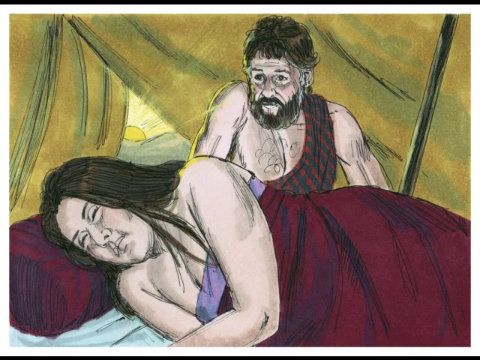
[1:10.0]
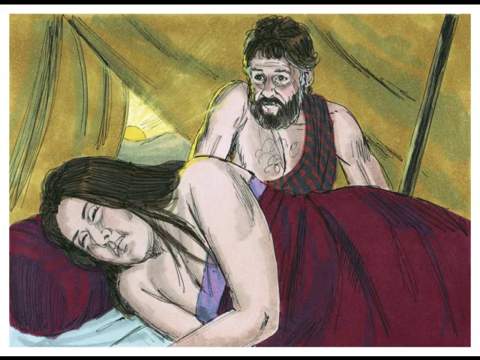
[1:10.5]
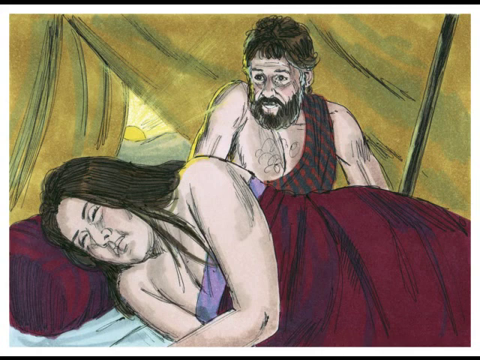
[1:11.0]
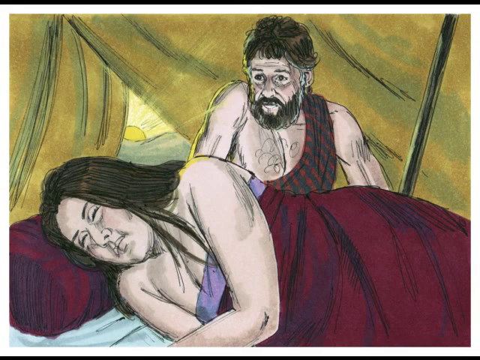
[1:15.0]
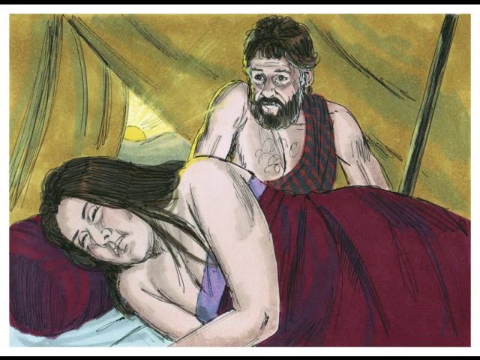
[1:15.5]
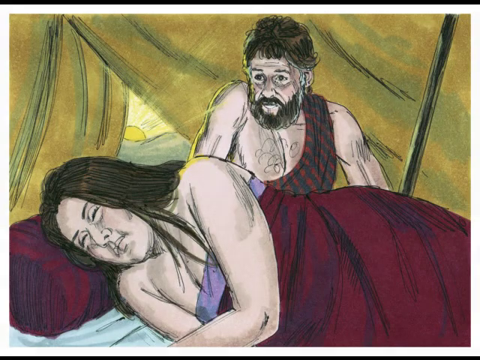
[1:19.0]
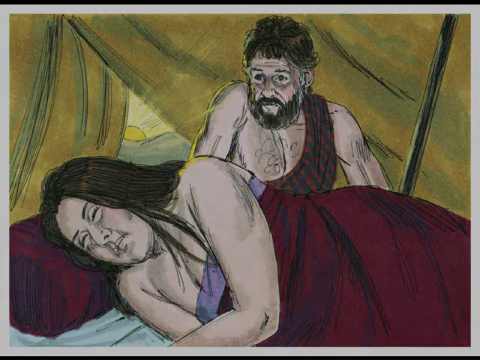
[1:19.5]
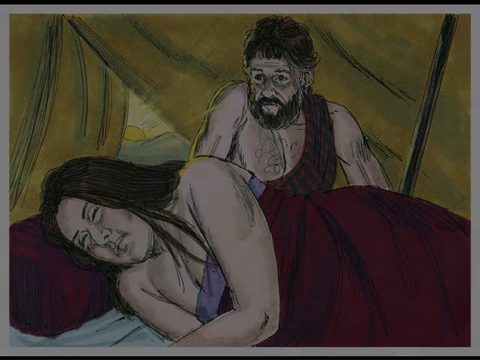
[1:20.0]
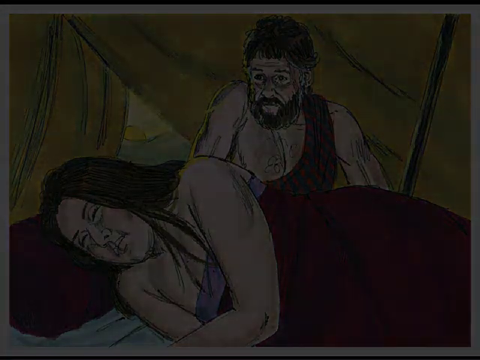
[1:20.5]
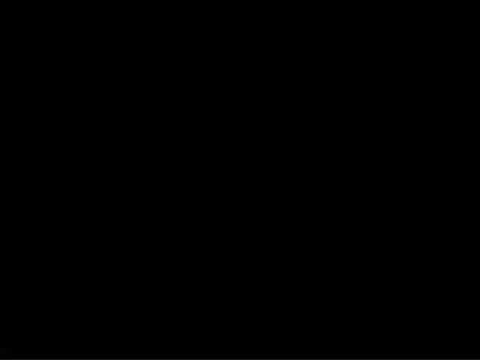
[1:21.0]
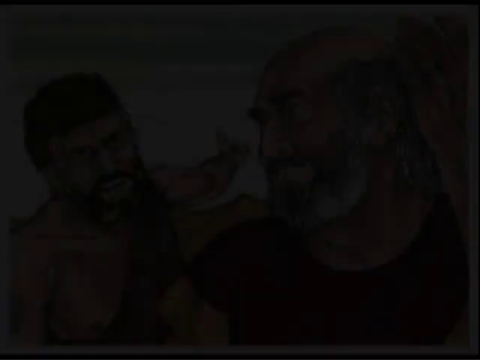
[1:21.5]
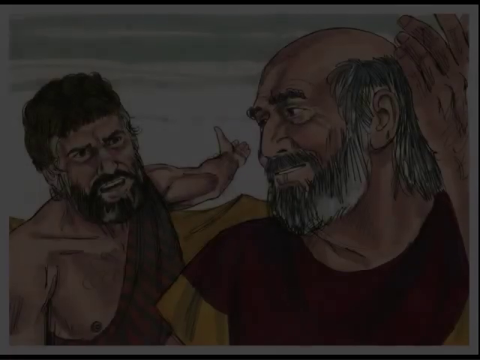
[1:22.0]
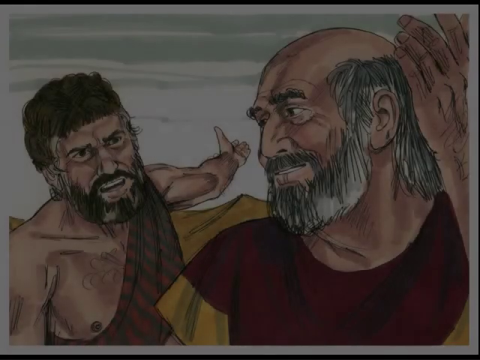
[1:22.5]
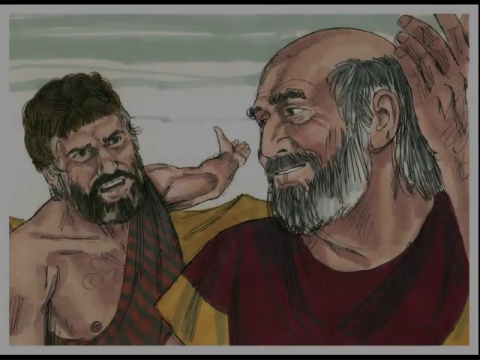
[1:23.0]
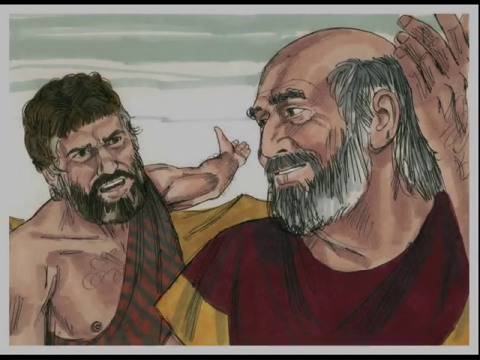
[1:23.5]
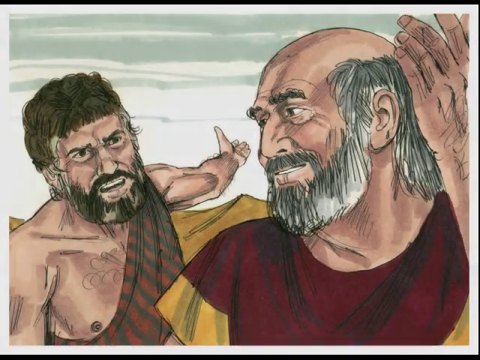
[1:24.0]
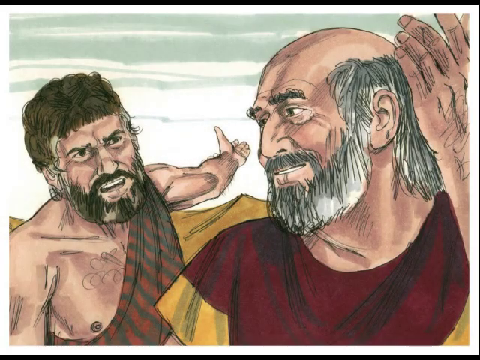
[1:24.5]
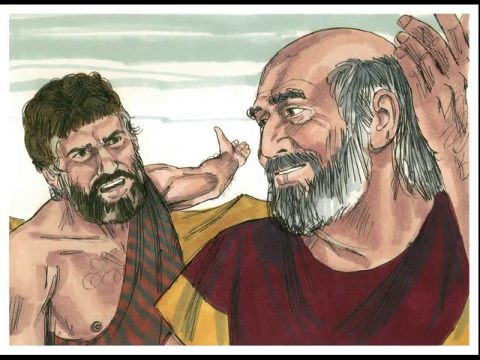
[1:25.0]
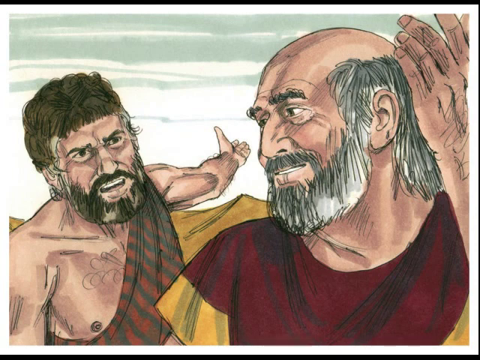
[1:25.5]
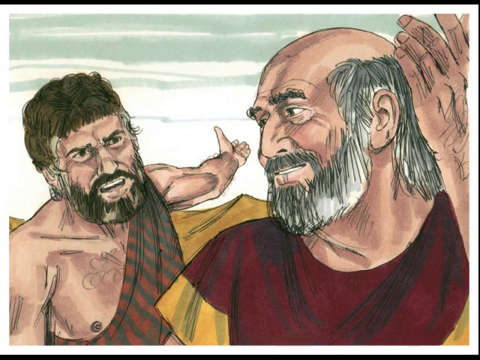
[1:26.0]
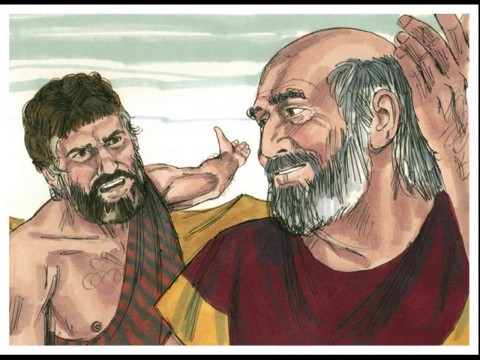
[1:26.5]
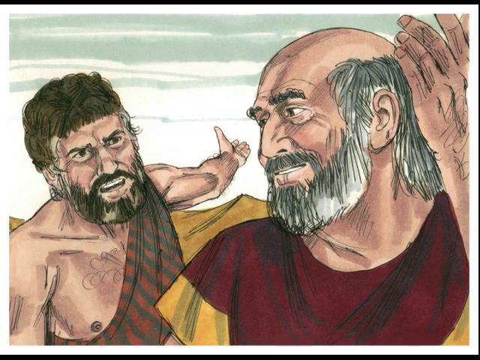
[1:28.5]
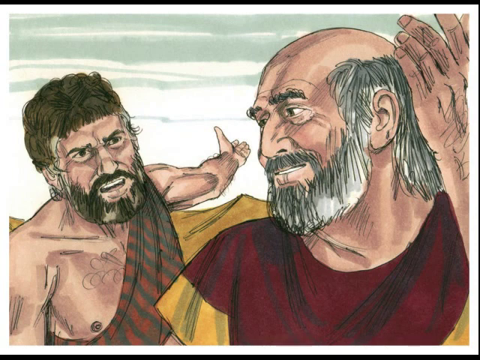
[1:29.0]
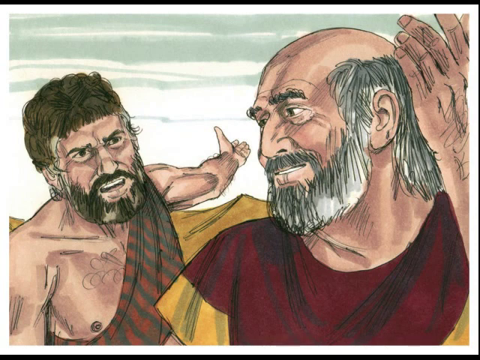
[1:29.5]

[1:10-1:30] A color rendering shows a man and a woman inside a tent. In the foreground the woman lies on her left side with her arms kind of crossed in front of her, right over left, her head on a rolled-up pillow and a sheet over her. Her eyes are closed as if she is probably asleep, but her face shows what may be distress or discomfort. Behind her, a man seems to be leaning on the surface she is lying on, whether a cot, a bed or the ground. Only his upper arms, from just above the elbow up, are visible, their tight muscles indicating he is supporting his weight on them. His eyes are wide open, he appears to wear glasses, and he has a mustache, a beard and shaggy hair. He gazes at the back of the woman's head with a look of what may be concern or confusion.